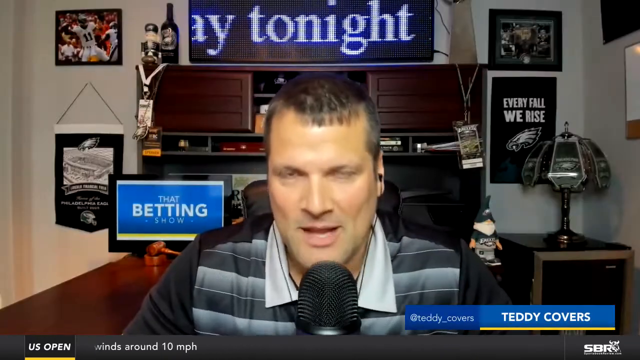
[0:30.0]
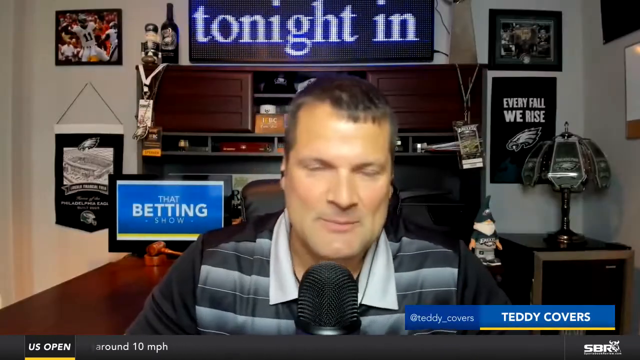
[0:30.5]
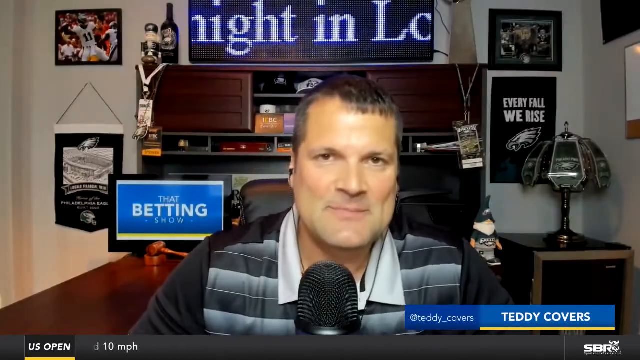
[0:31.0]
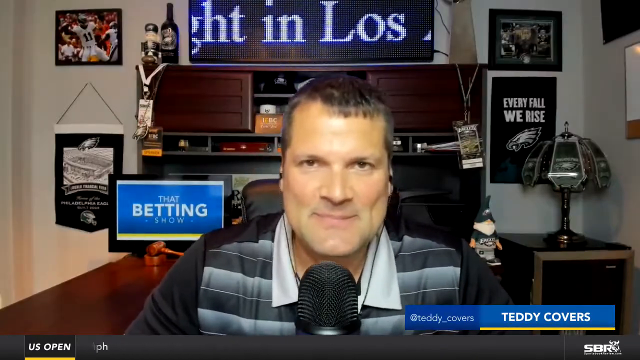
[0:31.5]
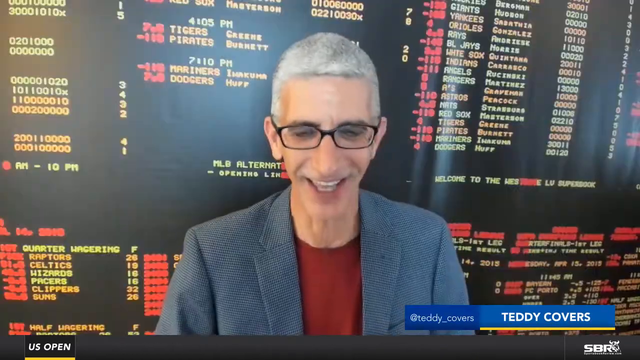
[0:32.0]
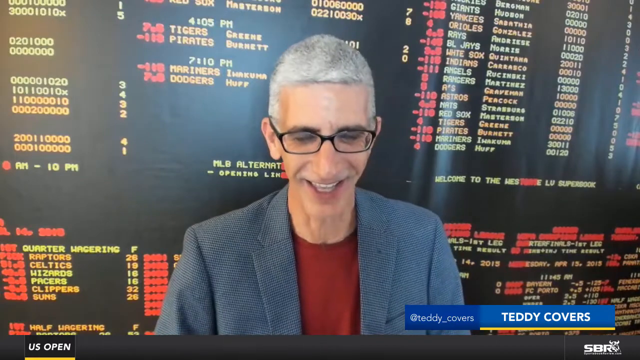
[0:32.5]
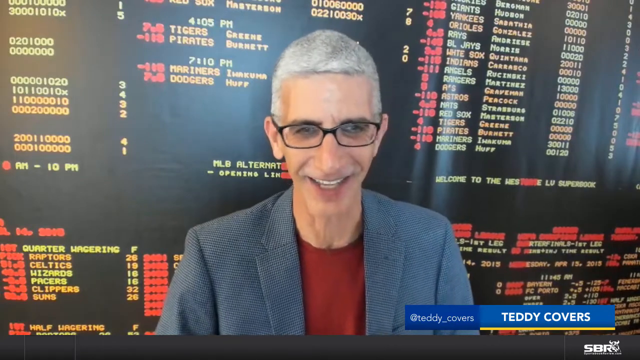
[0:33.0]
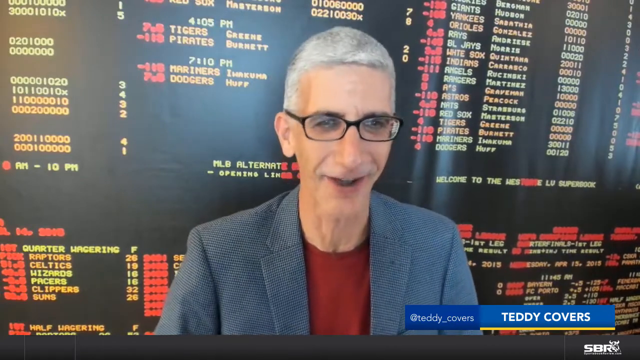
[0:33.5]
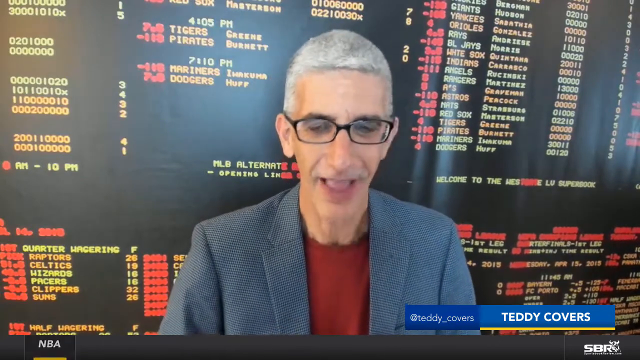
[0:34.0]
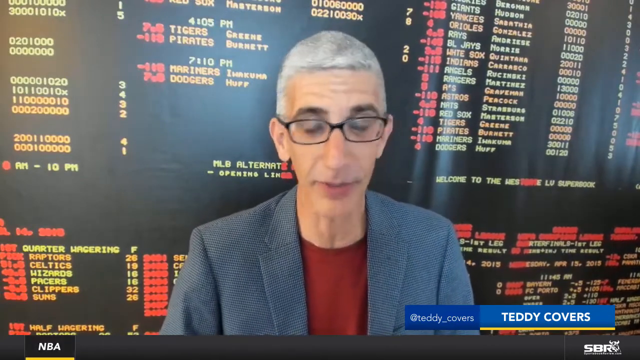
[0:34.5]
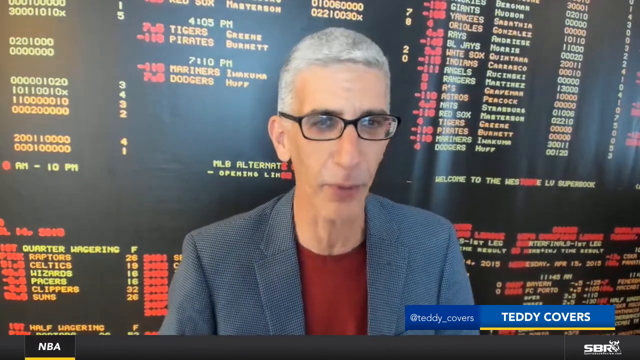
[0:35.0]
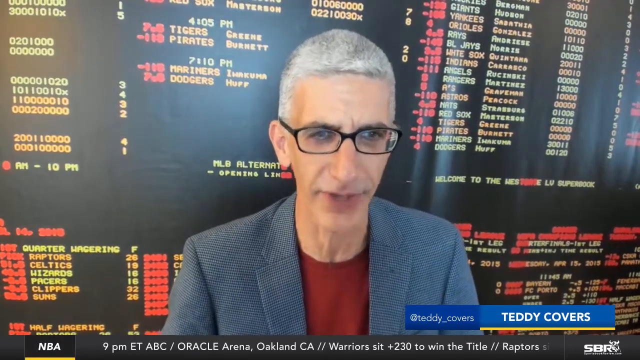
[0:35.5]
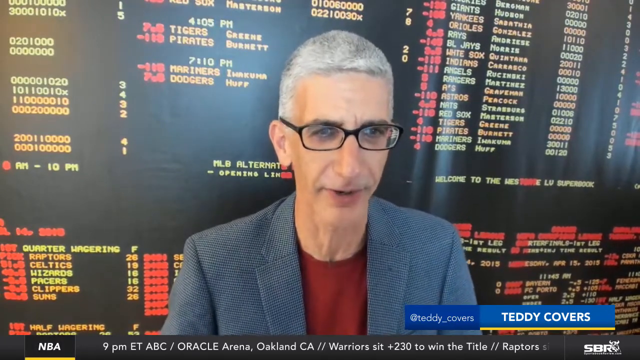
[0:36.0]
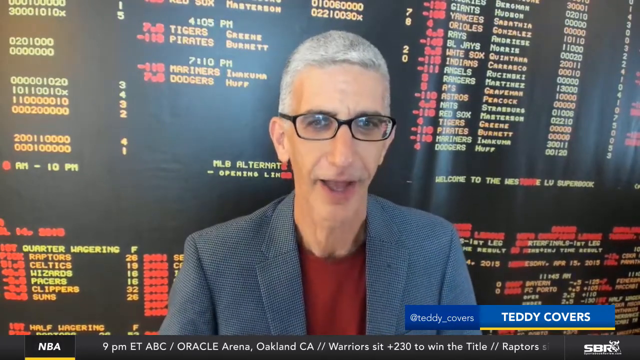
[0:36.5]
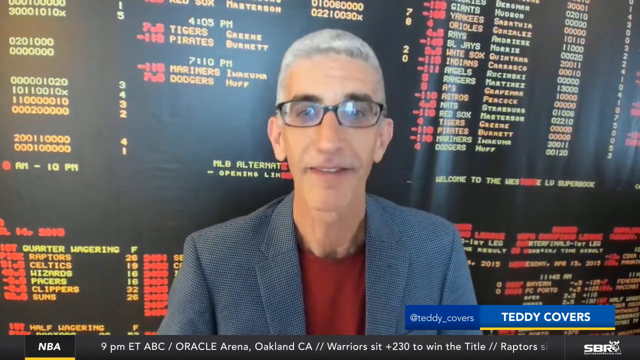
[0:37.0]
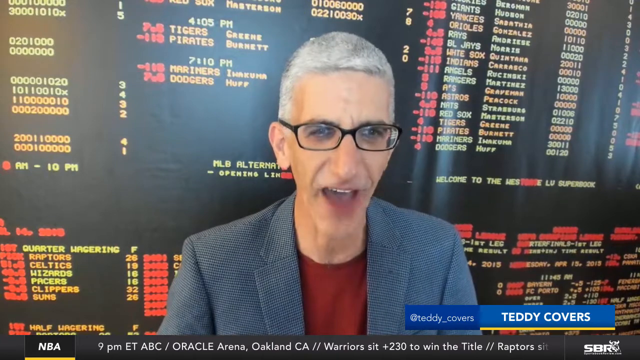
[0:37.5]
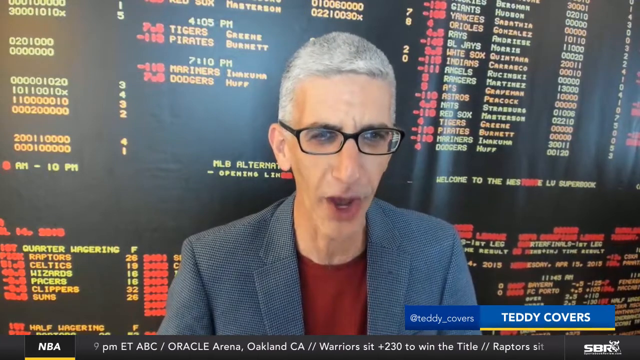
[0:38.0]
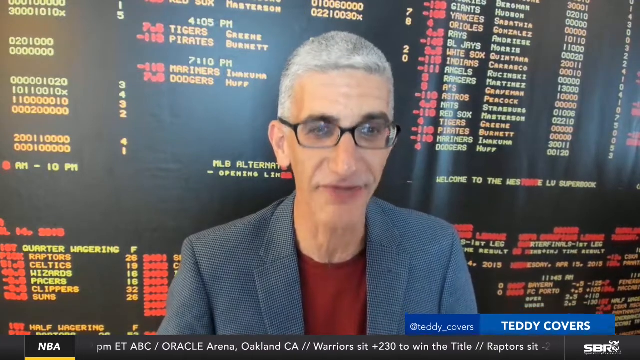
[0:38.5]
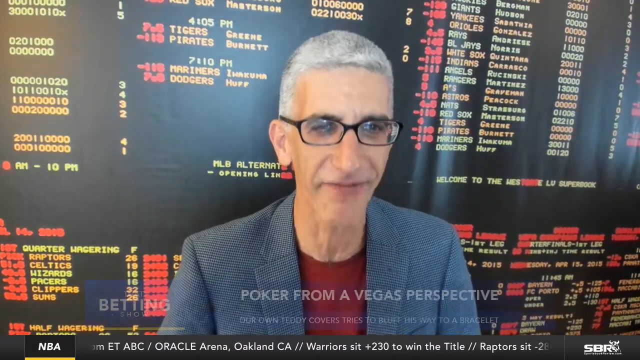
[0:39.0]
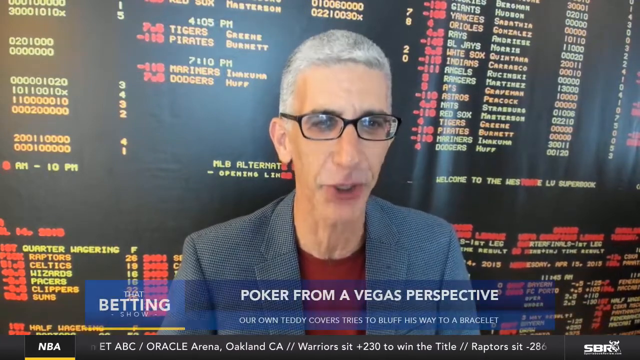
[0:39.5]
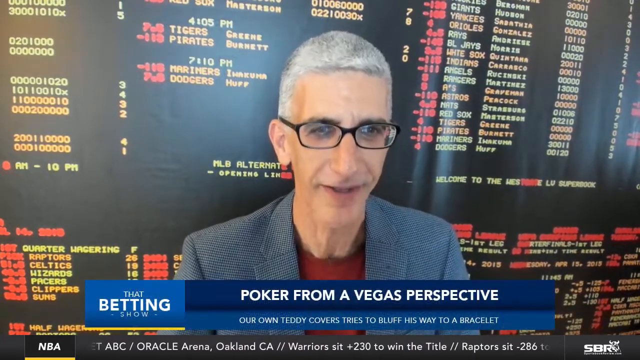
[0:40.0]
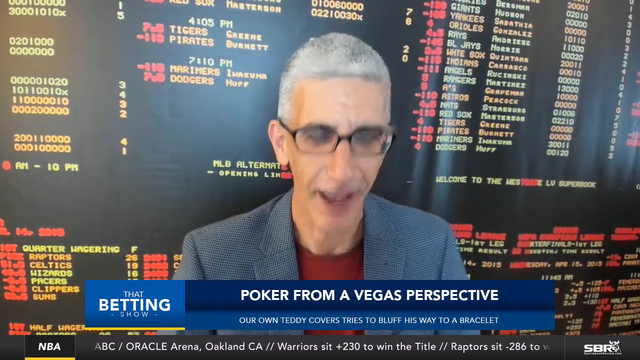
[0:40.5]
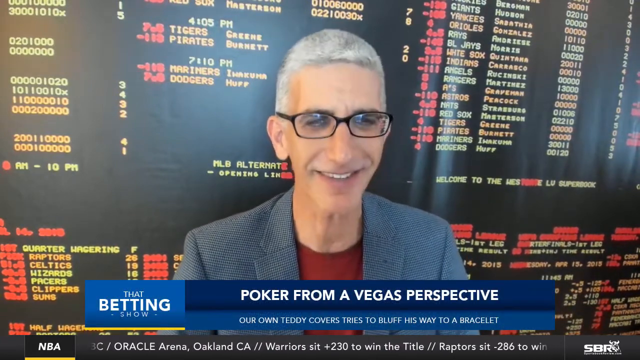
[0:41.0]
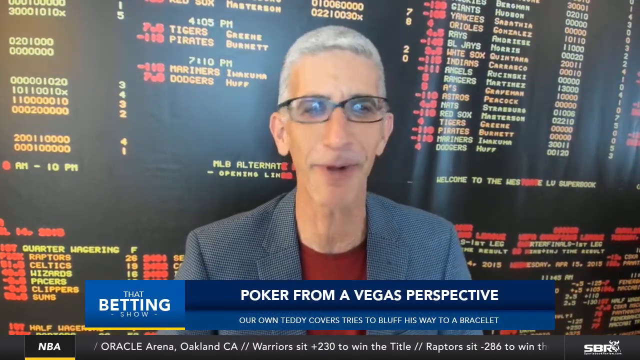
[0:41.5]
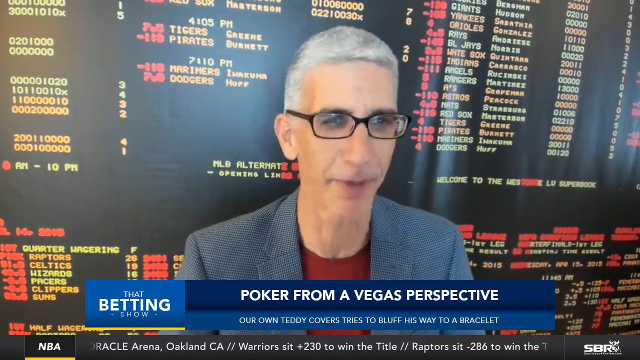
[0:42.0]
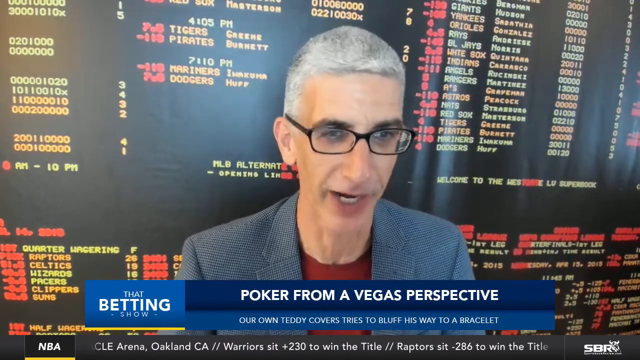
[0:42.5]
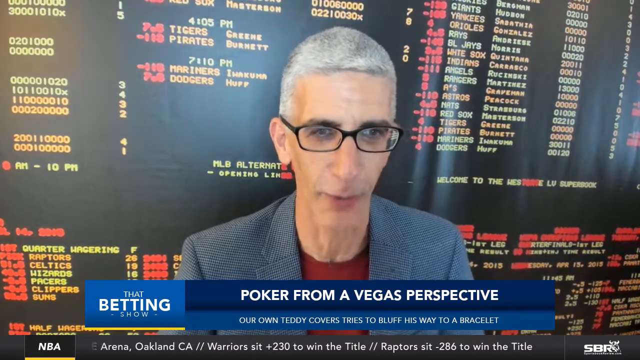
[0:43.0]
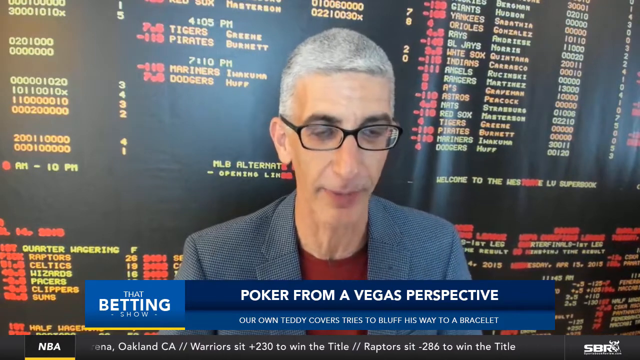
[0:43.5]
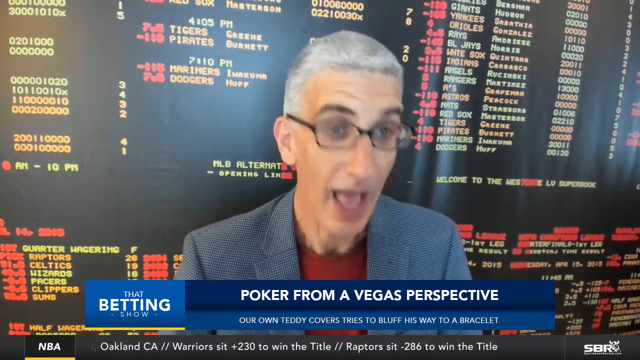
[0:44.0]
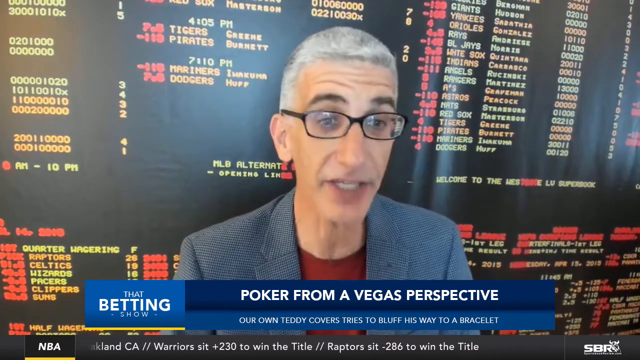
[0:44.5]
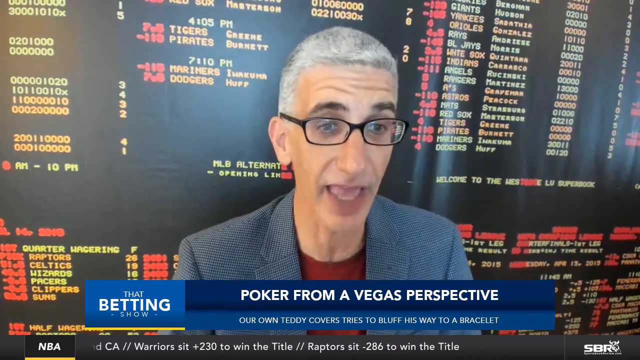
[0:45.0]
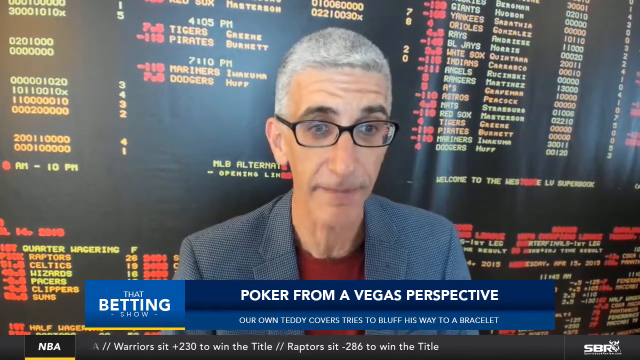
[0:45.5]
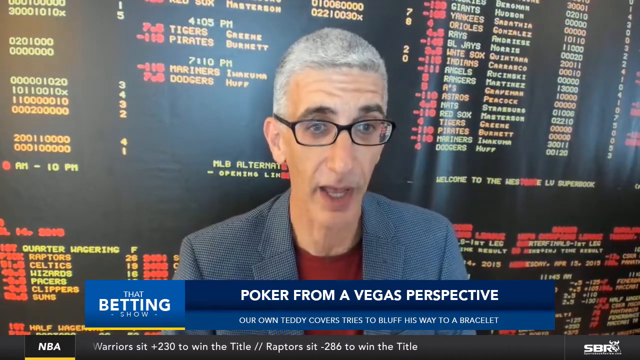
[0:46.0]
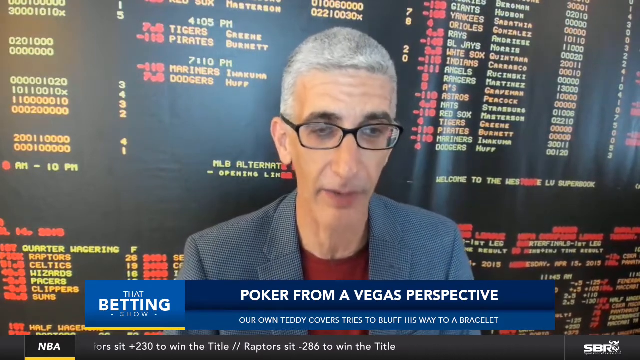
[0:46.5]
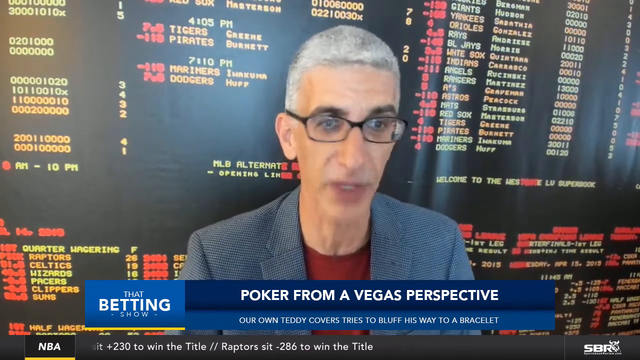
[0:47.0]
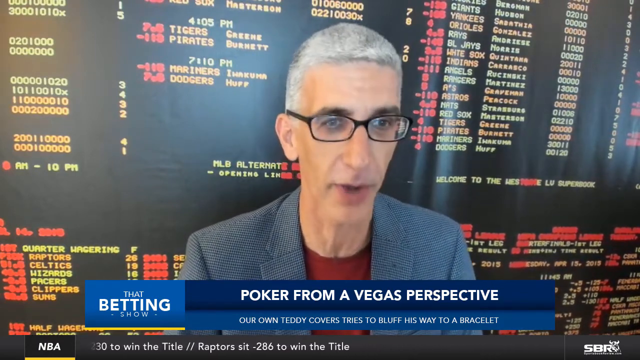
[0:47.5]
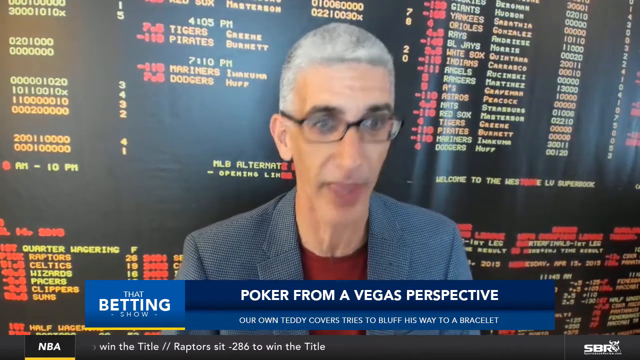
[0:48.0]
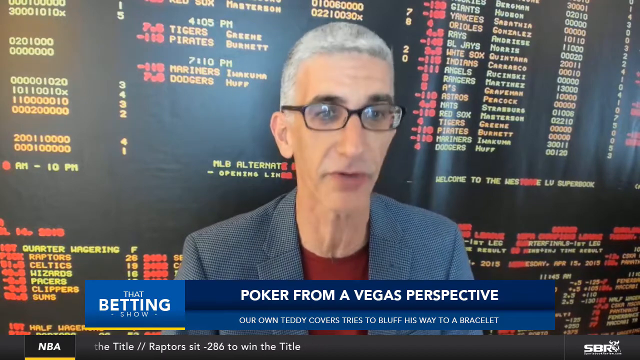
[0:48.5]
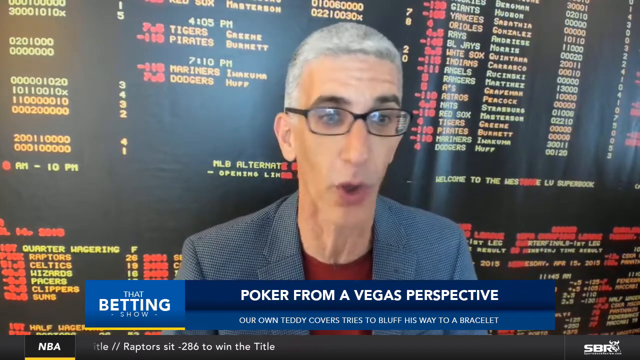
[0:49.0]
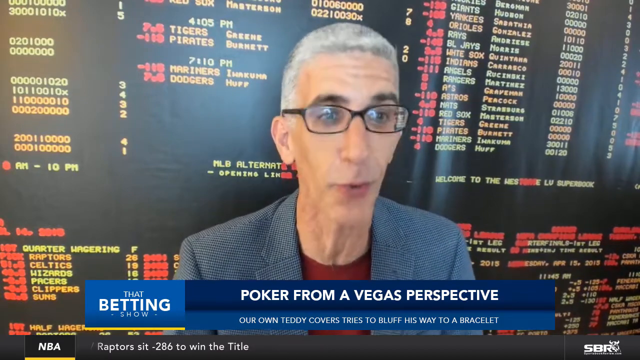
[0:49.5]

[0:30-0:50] The original man stops talking for a moment and closes his mouth, and then the video cuts to the skinnier man in the gray jacket, which almost looks like tweed, some kind of cloth. Seen from the chest up, he laughs a bit and talks as he laughs, talking really fast. A graphic pops up at the bottom reading "That. Betting Show" on the left and "Poker from a Vegas perspective" on the right. In the lower right is a logo for something called SBR, possibly the broadcasting network; it looks like a YouTube-type video. The skinny man might be named or nicknamed Teddy Covers. The large screen behind him fills the background entirely, and he appears to be there live. It shows a combination of white, yellow and red, with a lot of numbers, many 0s and 1s, and some team names. At center left it says "4:05 p.m." followed by "Tigers" and "Pirates", with betting odds to the left and what appear to be pitchers' names to the right. Below that are "7:10 p.m.", "Mariners" and "Dodgers". In the lower left corner are the names "Raptors", "Celtics", "Wizards" and "Pacers".